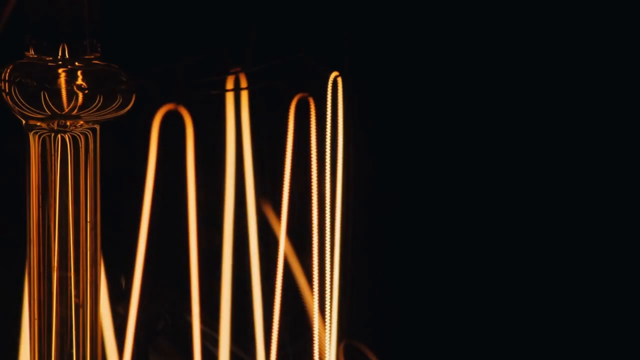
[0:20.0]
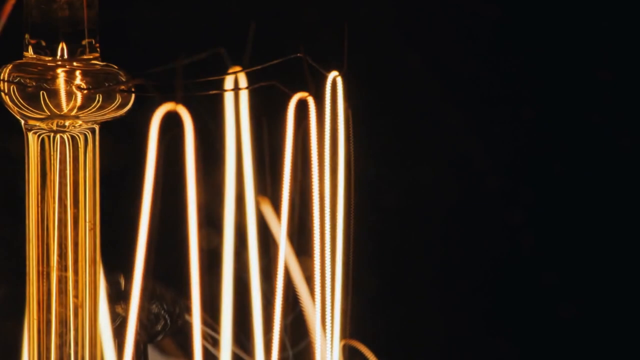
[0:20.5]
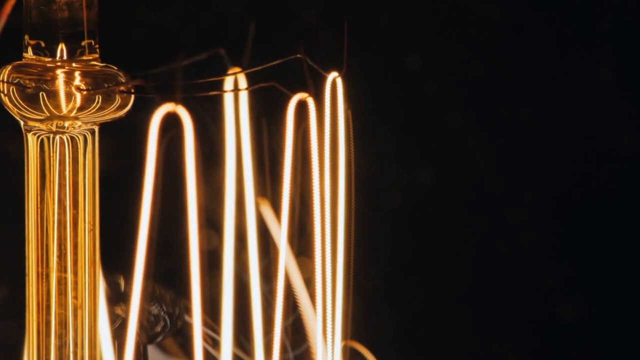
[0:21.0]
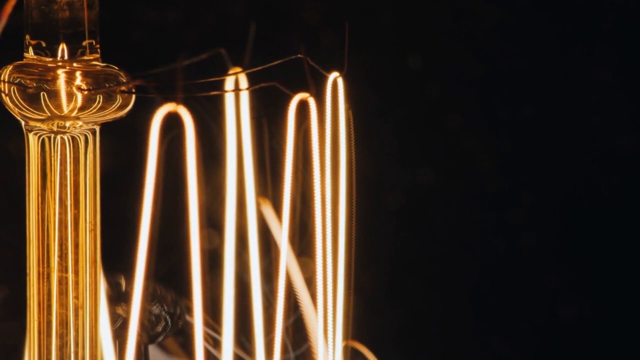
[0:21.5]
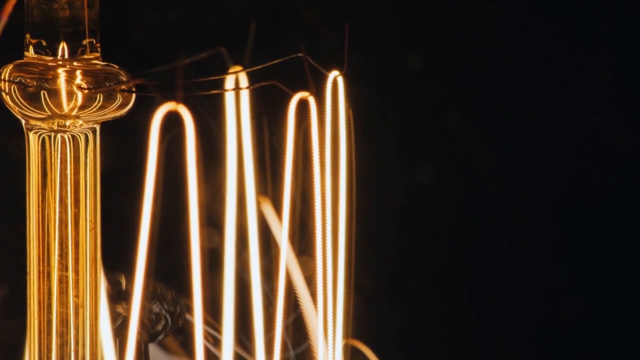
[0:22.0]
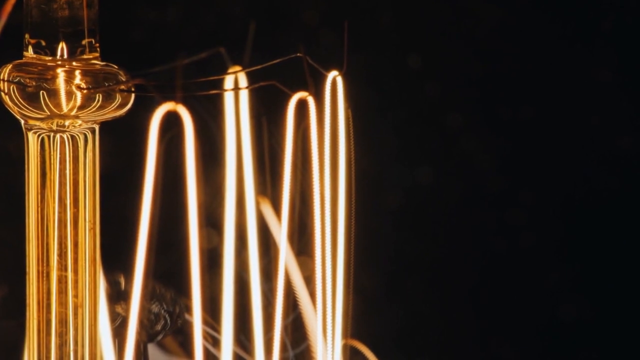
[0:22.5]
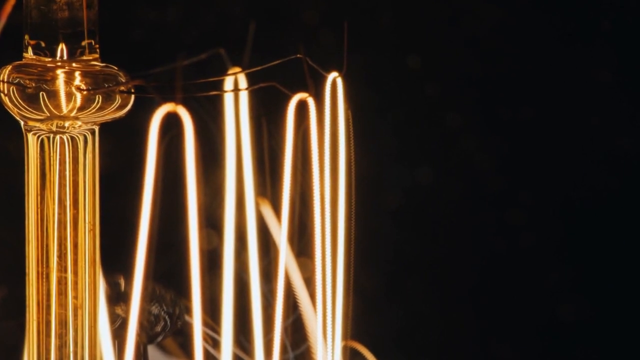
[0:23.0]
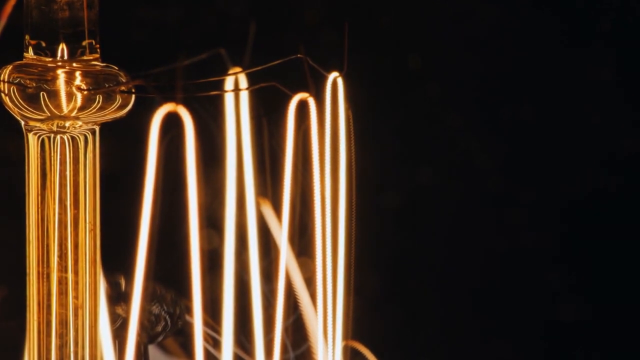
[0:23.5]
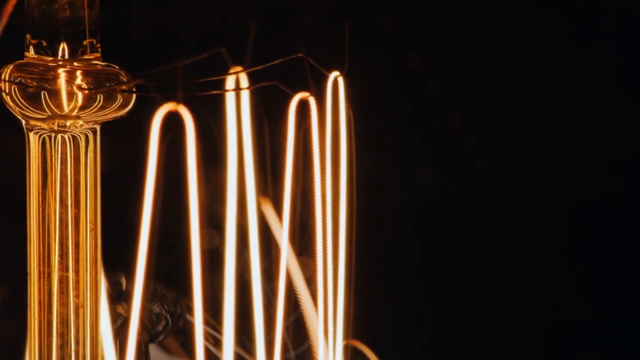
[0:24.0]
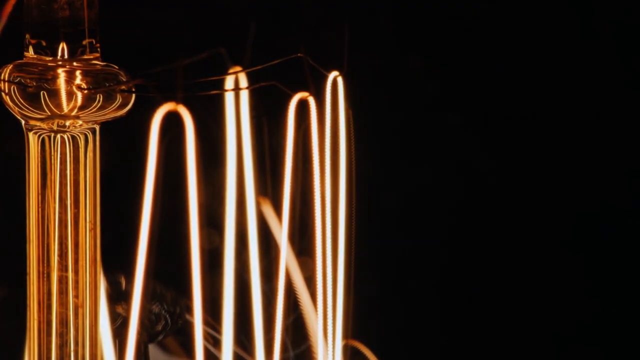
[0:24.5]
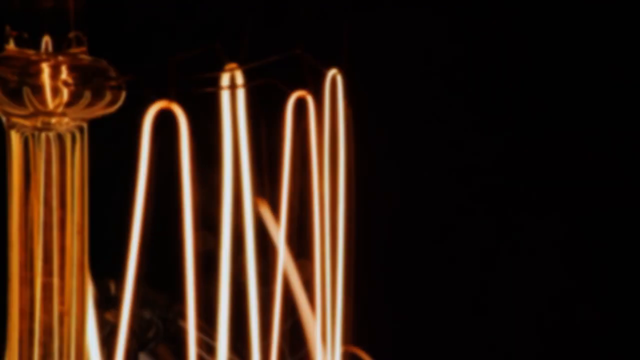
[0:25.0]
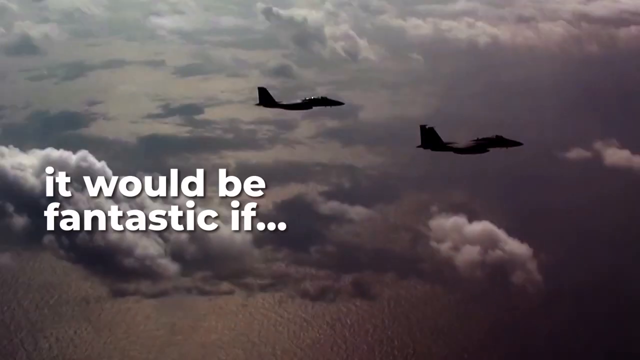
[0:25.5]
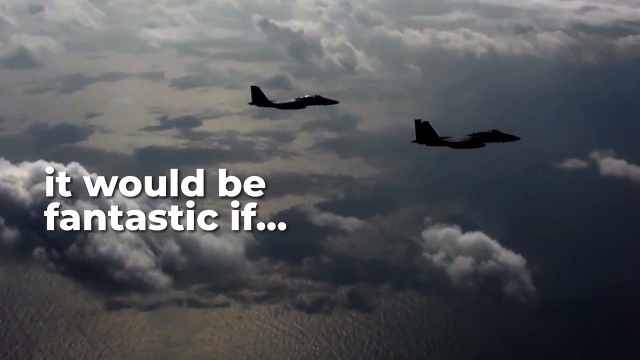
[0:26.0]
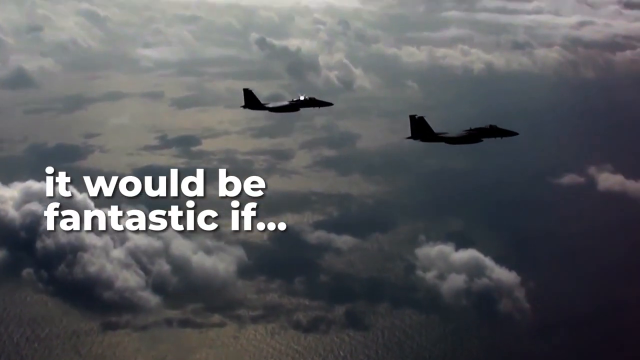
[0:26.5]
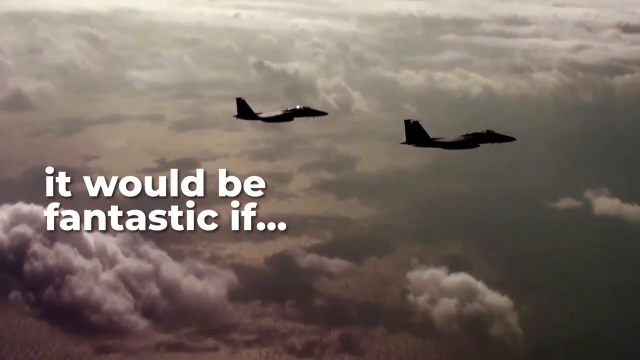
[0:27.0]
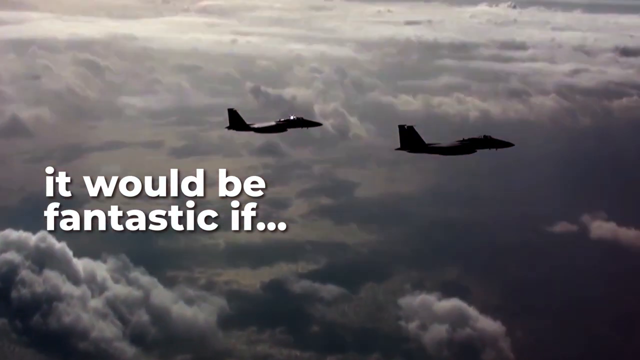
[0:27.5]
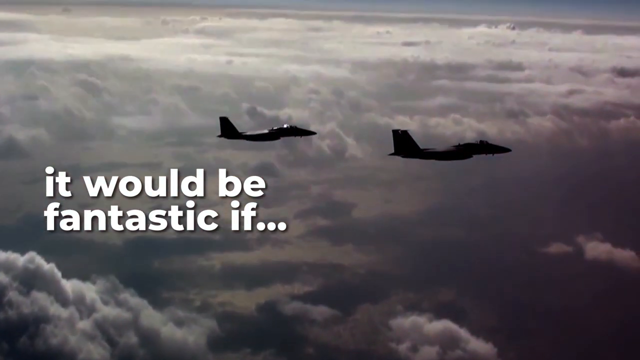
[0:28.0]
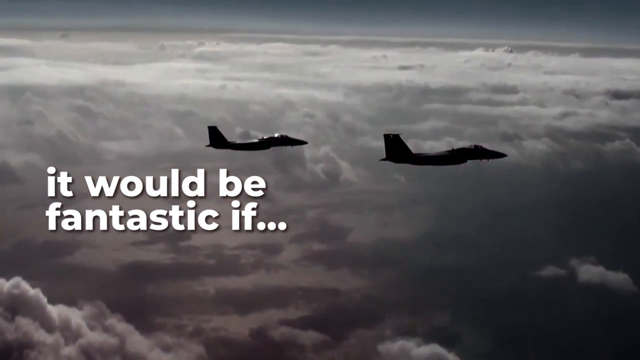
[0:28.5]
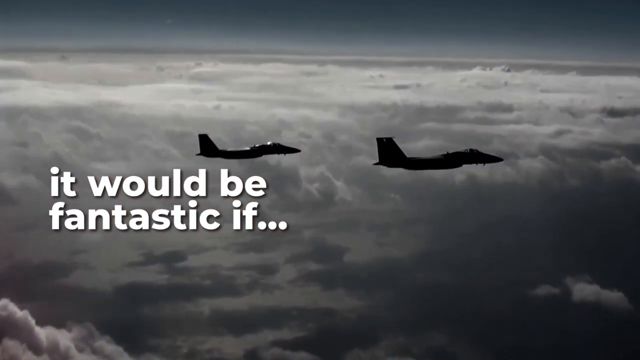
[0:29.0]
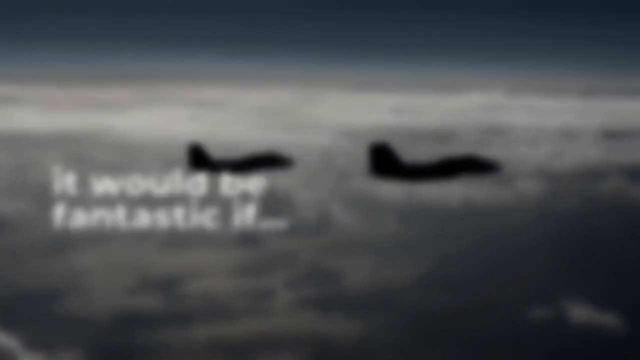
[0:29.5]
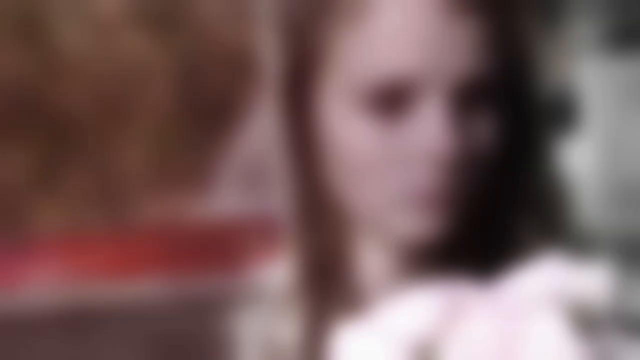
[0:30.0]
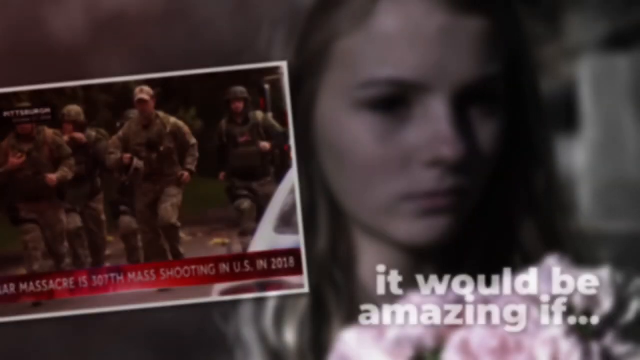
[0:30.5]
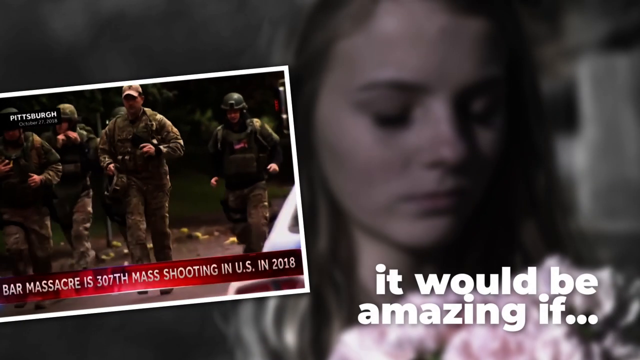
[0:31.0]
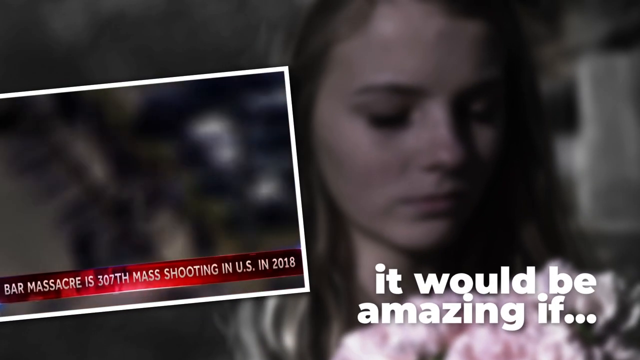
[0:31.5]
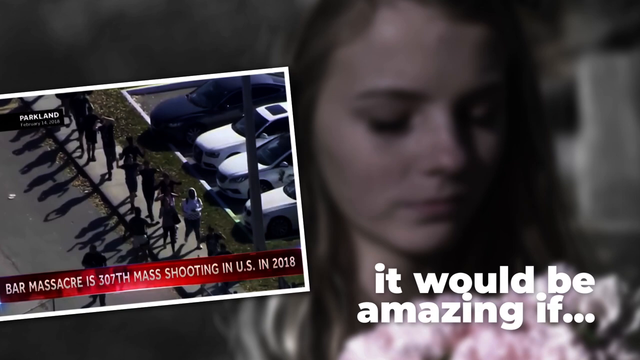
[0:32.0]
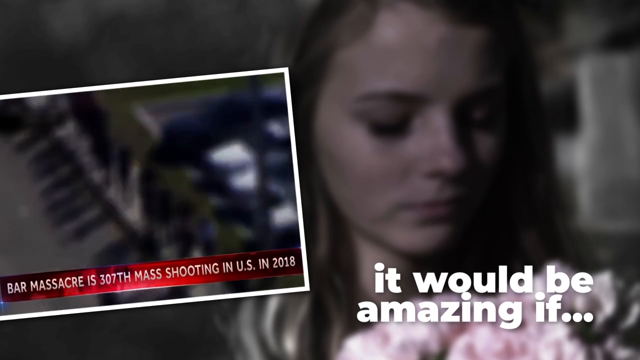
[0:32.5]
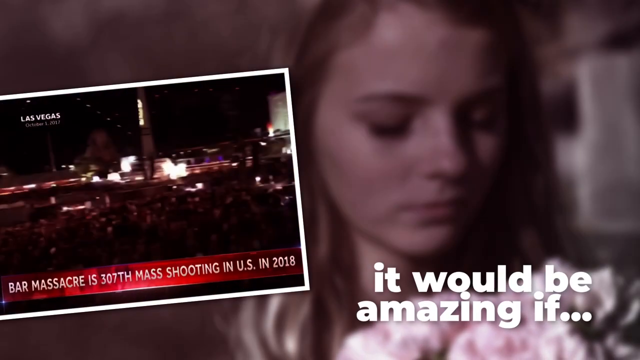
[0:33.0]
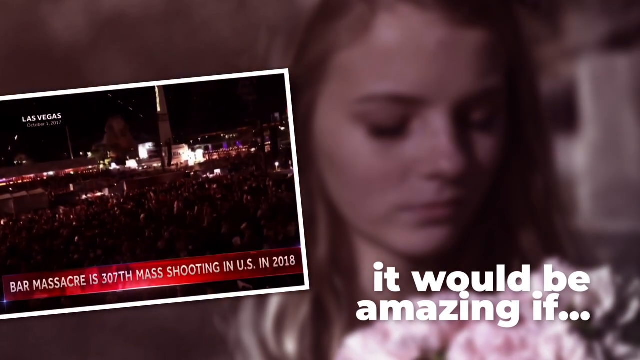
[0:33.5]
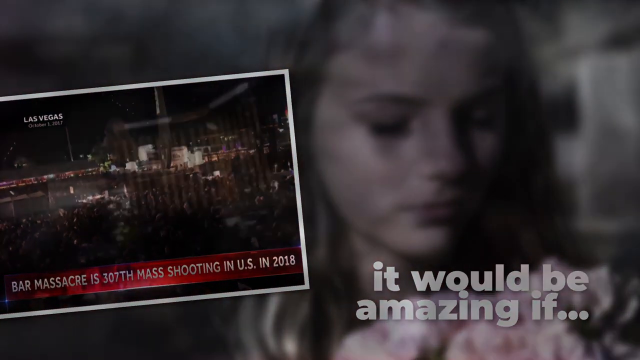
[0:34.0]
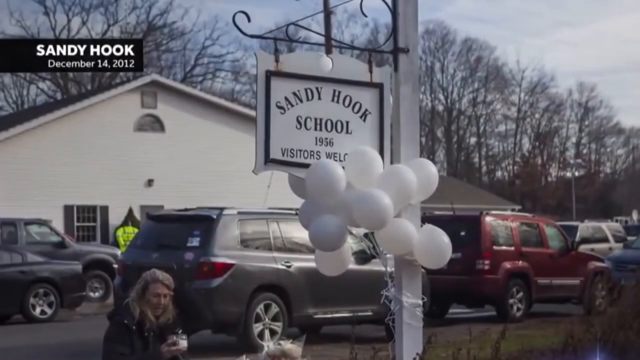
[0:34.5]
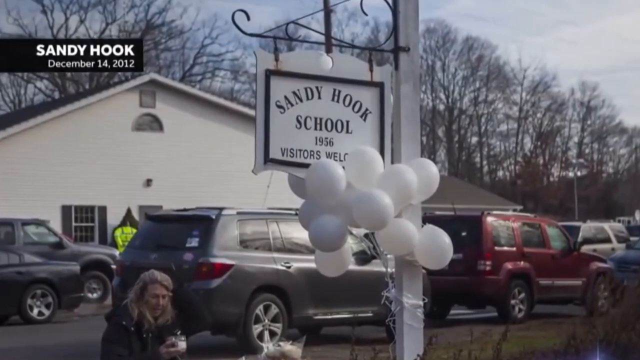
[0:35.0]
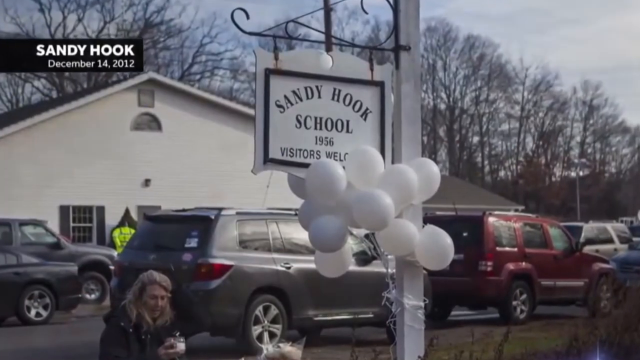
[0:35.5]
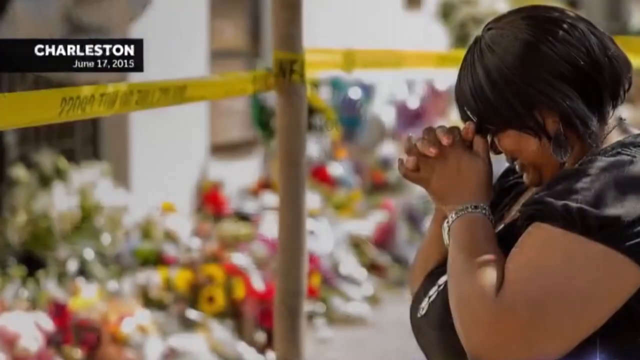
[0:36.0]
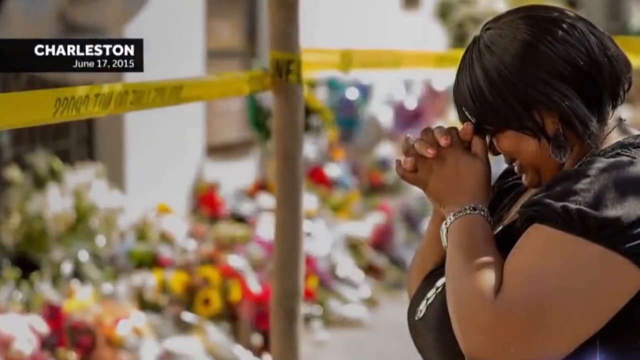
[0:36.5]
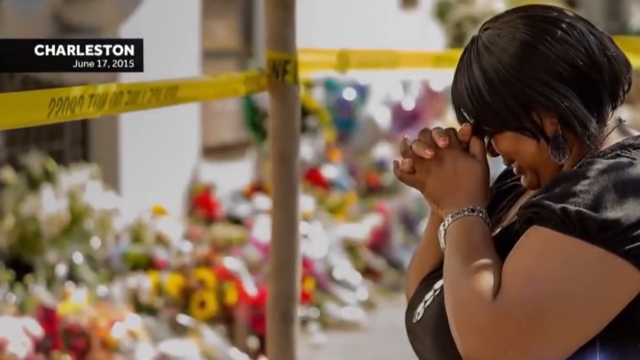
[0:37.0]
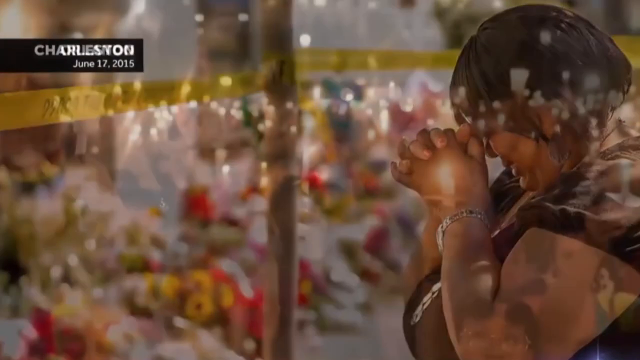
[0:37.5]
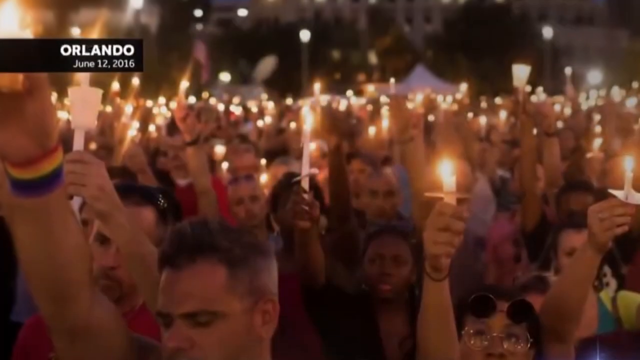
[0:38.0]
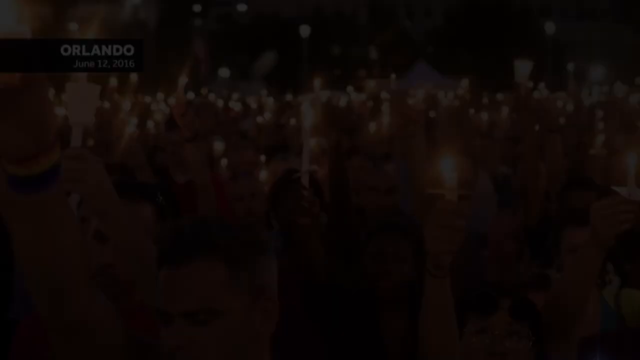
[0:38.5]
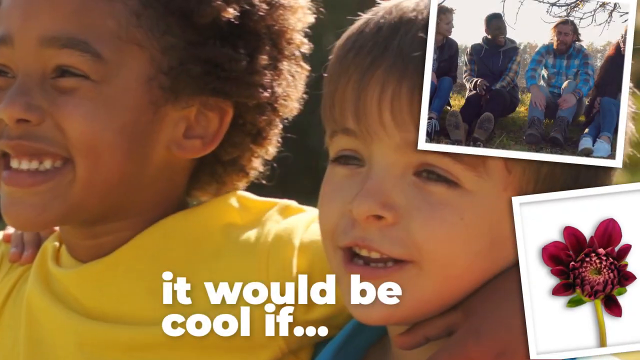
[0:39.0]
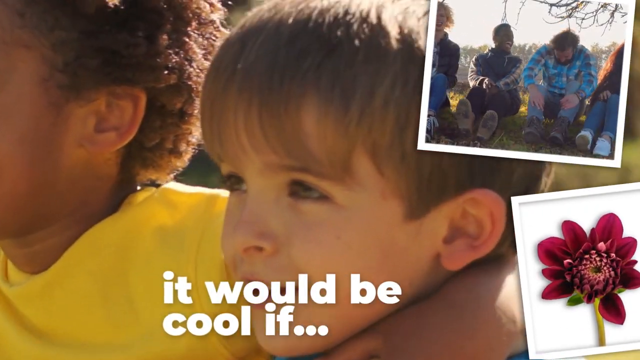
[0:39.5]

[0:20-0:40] An old-style tungsten light with all its wires appears, with a glass core on the left-hand side and lots of loops of wire on the right-hand side. The light glows against the black background on the right-hand side. Next, two fighter jets fly in the sky, with clouds below and in the background. On the left-hand side, in the middle, text reads "it would be fantastic if...". The camera pans up, revealing the horizon and more clouds in the background. This fades into a woman on the right-hand side; her head is visible, and she has her eyes closed and looks slightly downward. Text in the bottom right corner reads "it would be amazing if...". On the left-hand side is another thumbnail or photo clip of people walking in a line next to a parking lot, with a ticker reading "Bar Massacre is 307th mass shooting in US in 2018". The video then goes to a darker shot of a crowd of people, with "Las Vegas" in the top left. Next is a still image of a school parking lot outside, with a sign saying "Sandy Hook School, 1956. Visitors welcome." Cars are parked in front: a silver car, with a red car to the right of it. They are in front of a white building with a low roof, with trees in the background. In the foreground is a woman just to the left of the car. Text in the top left says "Sandy Hook, December 14th, 2012". Another still image follows: a yellow police line tied to a vertical pole, with blurred flowers in the background. On the right-hand side is a woman with black hair, her hands clasped together, wearing a watch; her eyes are closed and she looks downward toward the flowers. The next photo shows a crowd of people holding candles in the air at nighttime, with "Orlando, June 12th, 2016" in the top left.